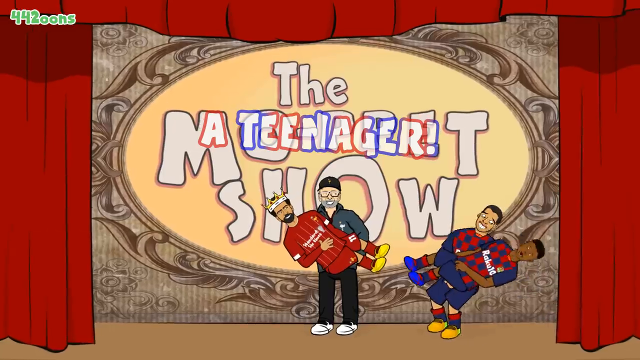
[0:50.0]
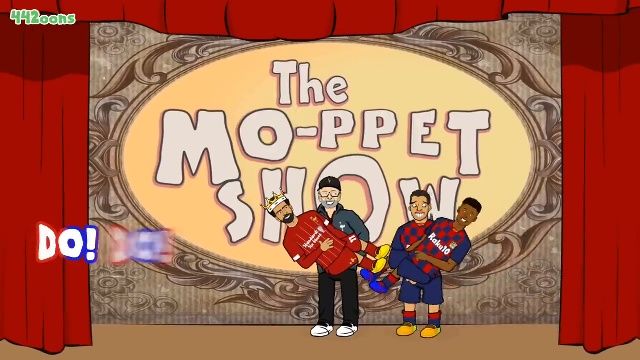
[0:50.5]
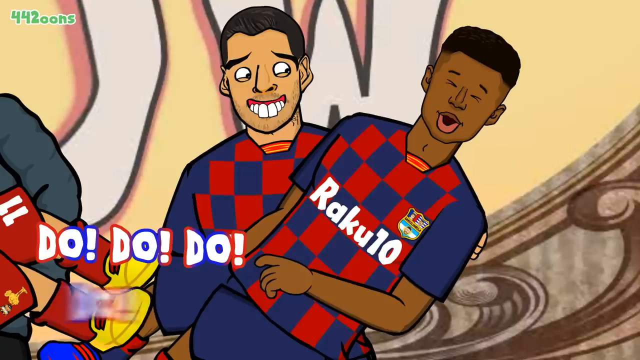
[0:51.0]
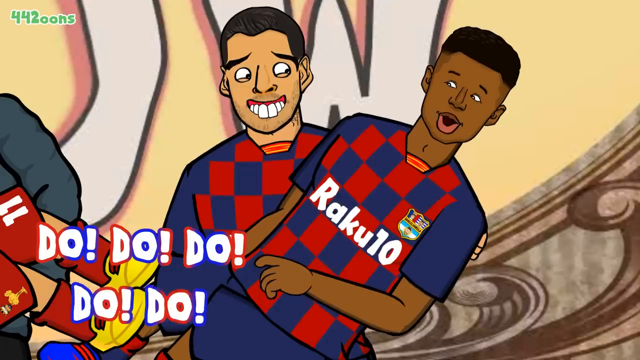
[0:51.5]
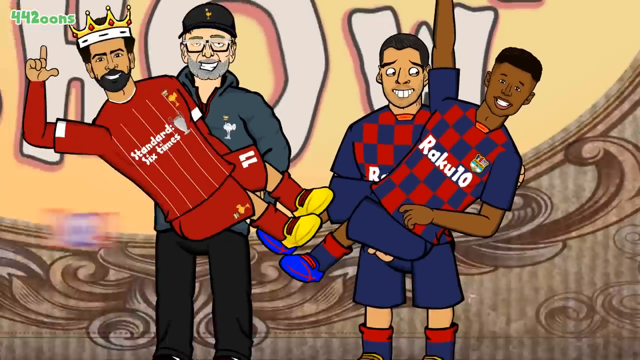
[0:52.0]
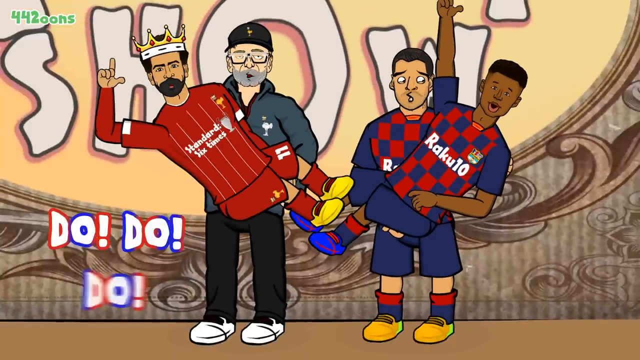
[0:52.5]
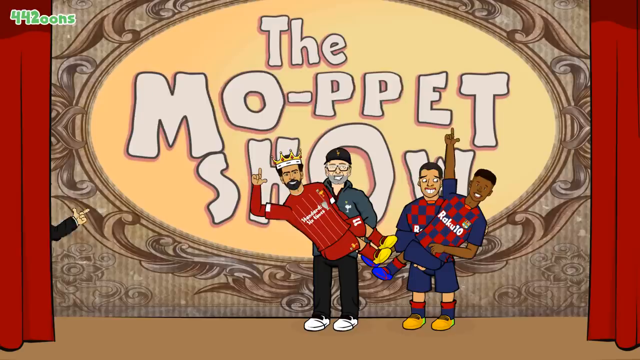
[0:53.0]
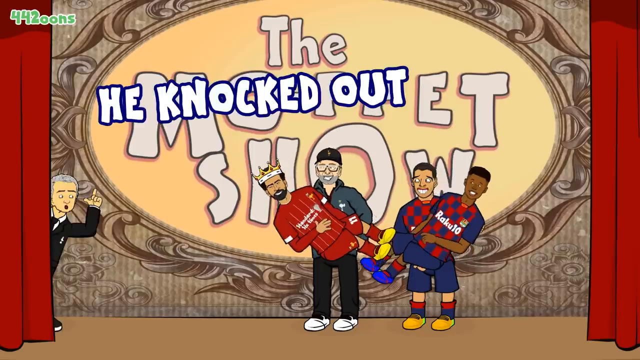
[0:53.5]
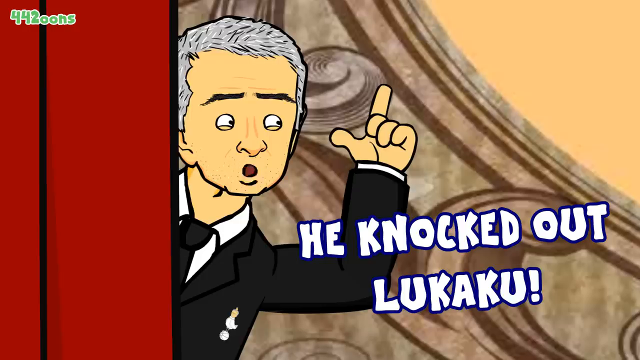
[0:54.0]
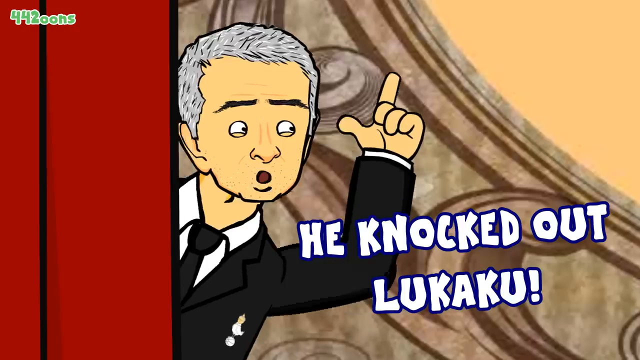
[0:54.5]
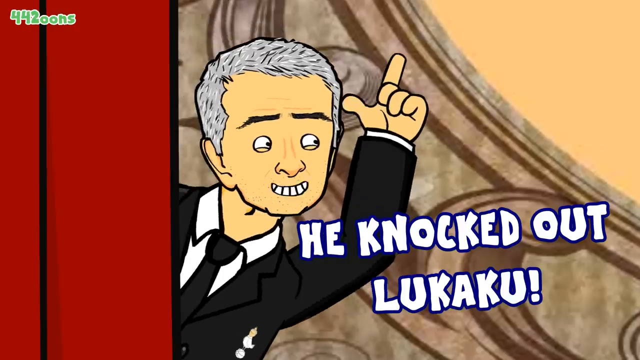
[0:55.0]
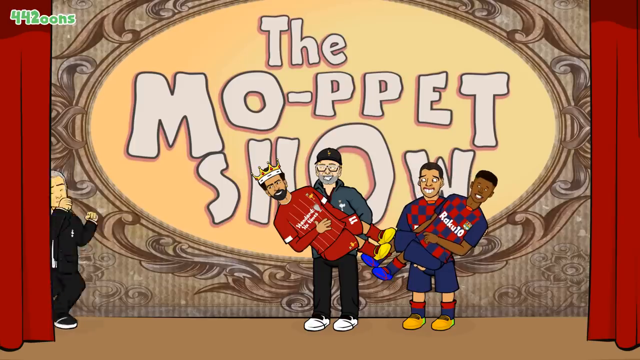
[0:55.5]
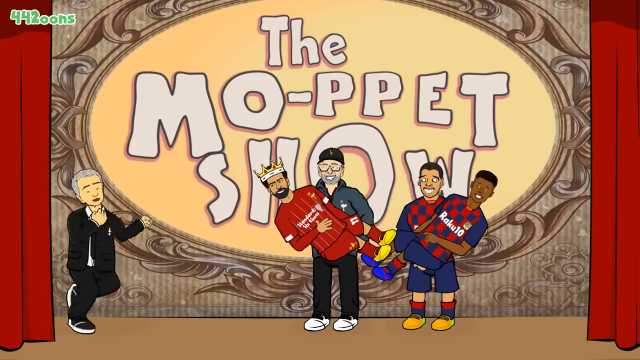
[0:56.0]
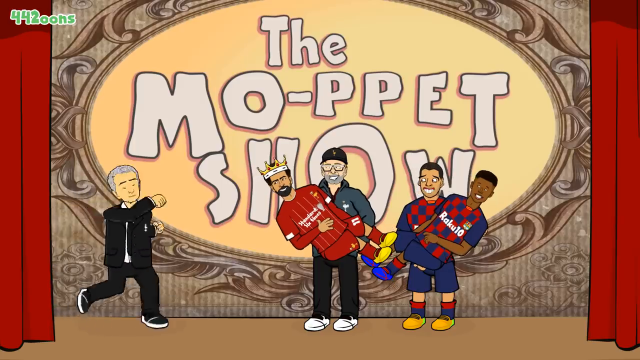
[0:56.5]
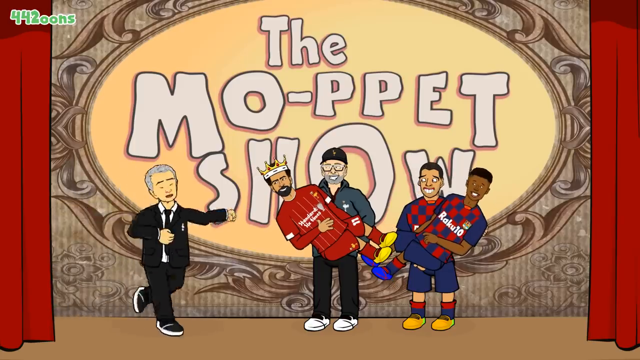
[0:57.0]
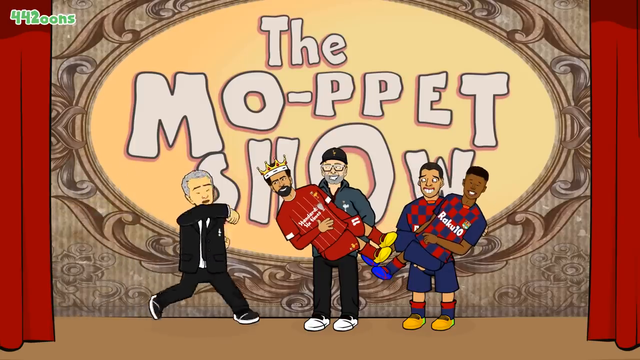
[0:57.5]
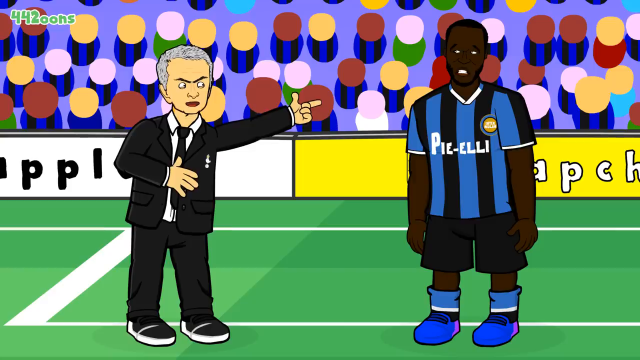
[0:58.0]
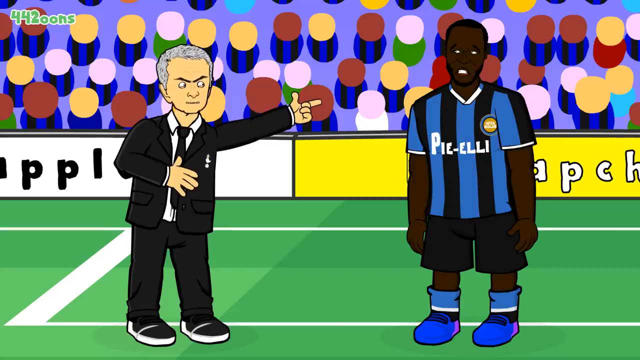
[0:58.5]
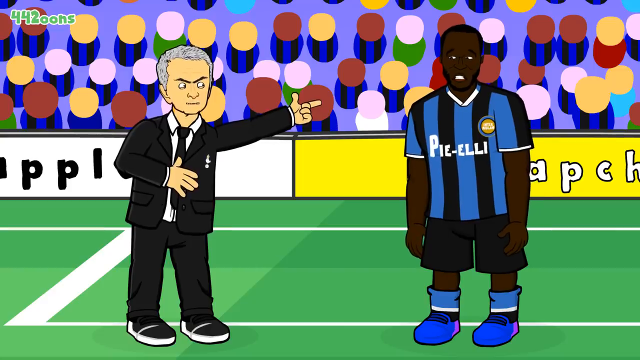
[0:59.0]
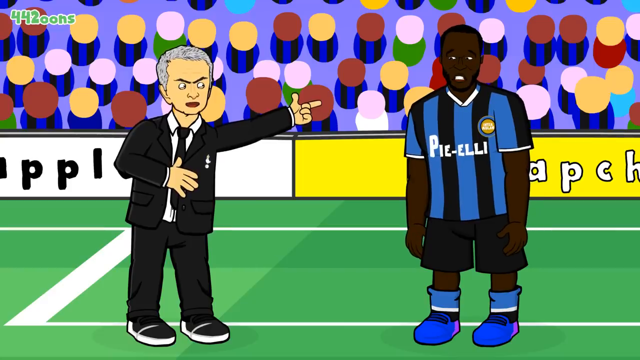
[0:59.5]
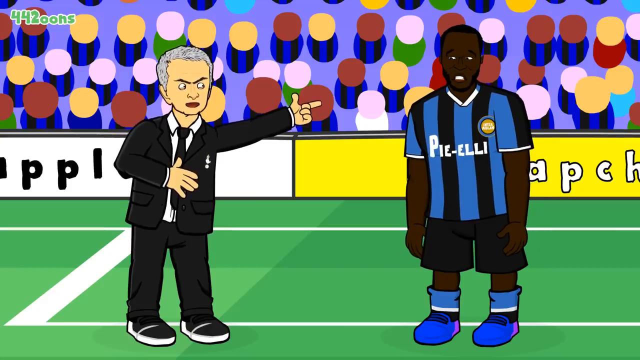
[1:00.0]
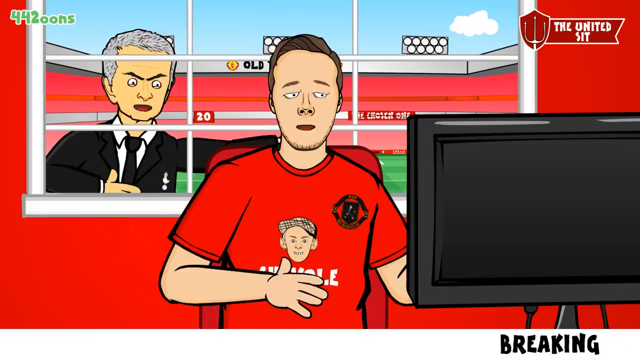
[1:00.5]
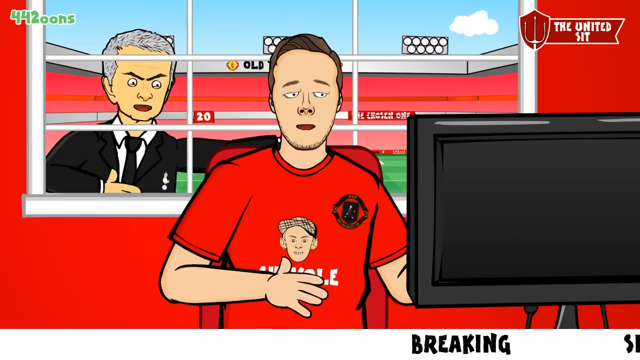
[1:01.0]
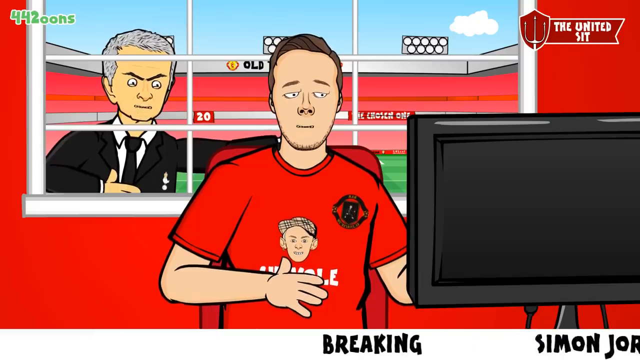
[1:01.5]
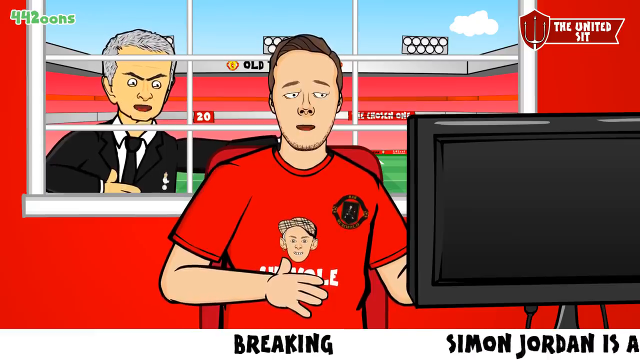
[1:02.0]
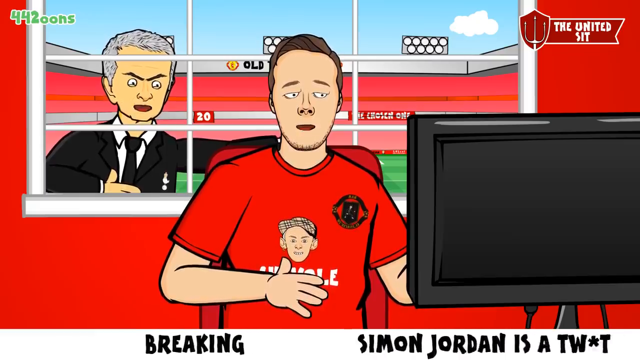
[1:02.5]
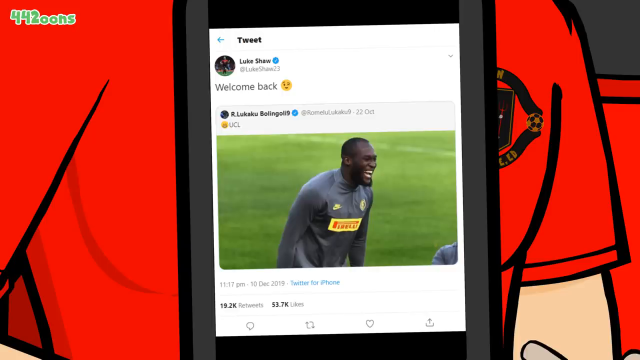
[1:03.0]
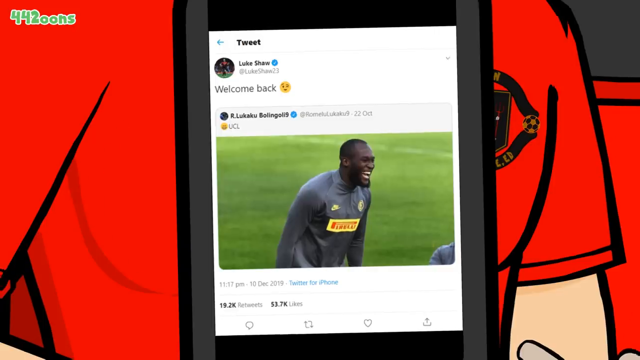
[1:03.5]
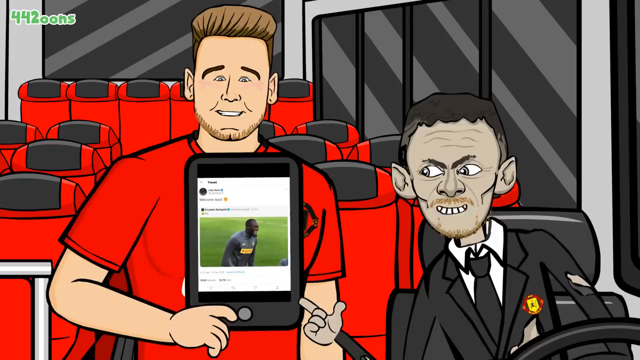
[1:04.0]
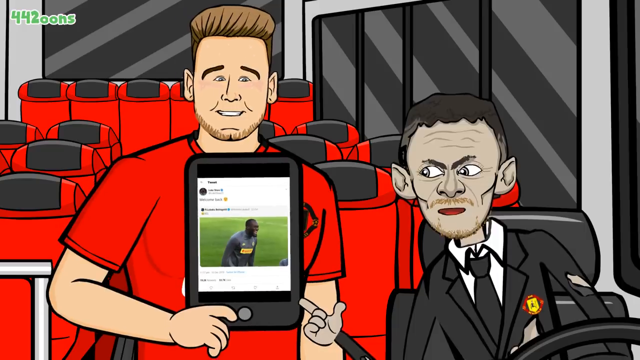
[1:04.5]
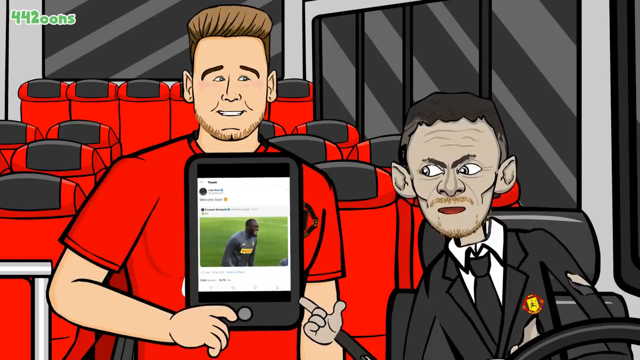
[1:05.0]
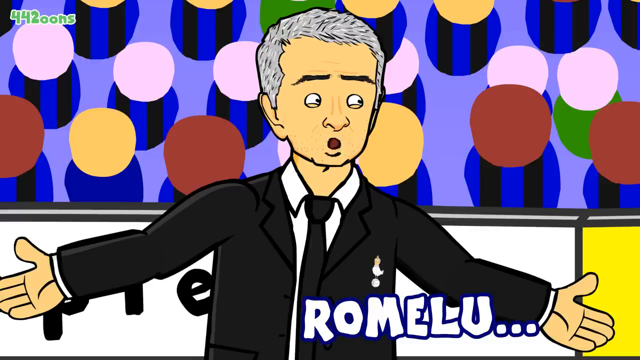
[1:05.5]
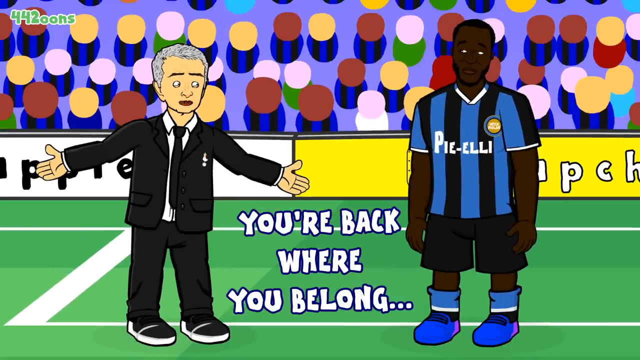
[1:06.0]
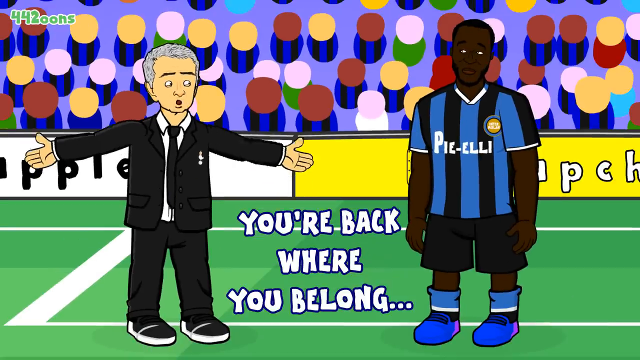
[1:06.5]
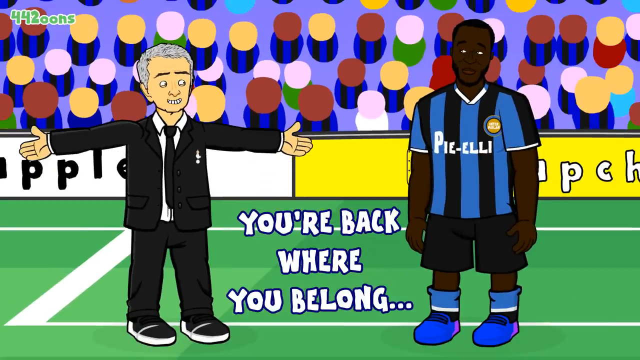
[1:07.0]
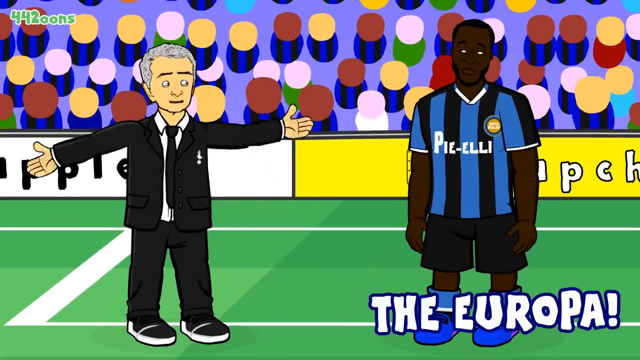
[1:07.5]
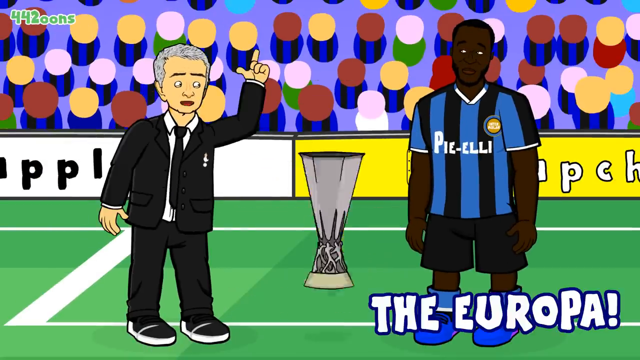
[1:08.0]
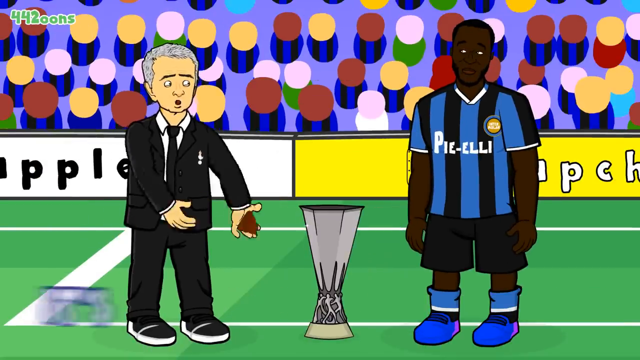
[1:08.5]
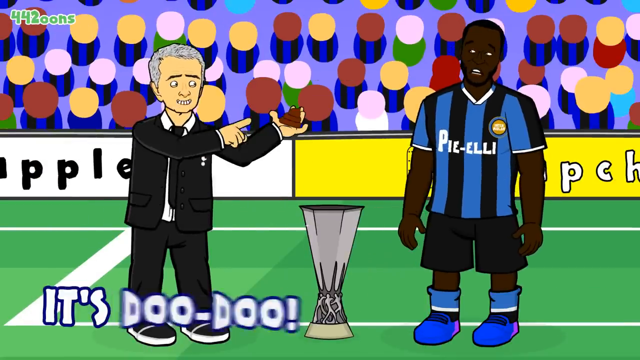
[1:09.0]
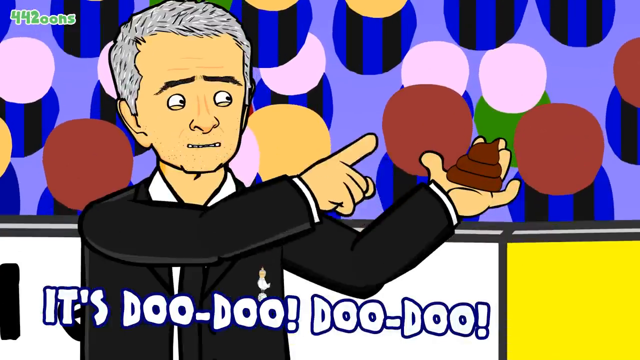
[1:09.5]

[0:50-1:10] A show title is in the background of a few characters. A man in a suit pops up from behind a red curtain and seems to point upward toward the show sign. Four other characters stand across from him, laughing or smiling. The man in the suit marches toward the four characters, singing a tune to himself. In a new scene, the man in the suit is on the field, pointing at and speaking to a player in a blue and black striped soccer uniform. The video then moves to two new characters chatting about a post on a bus.